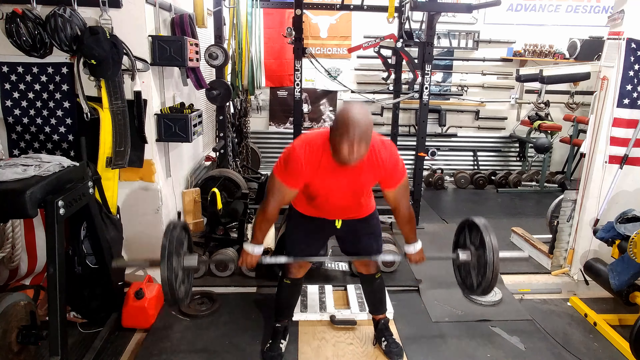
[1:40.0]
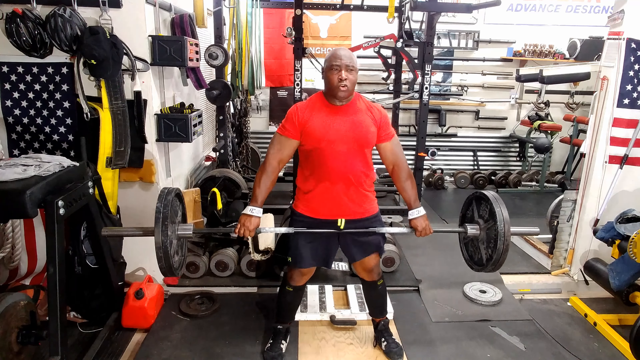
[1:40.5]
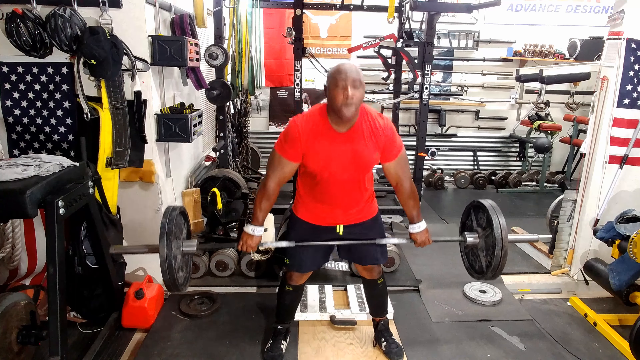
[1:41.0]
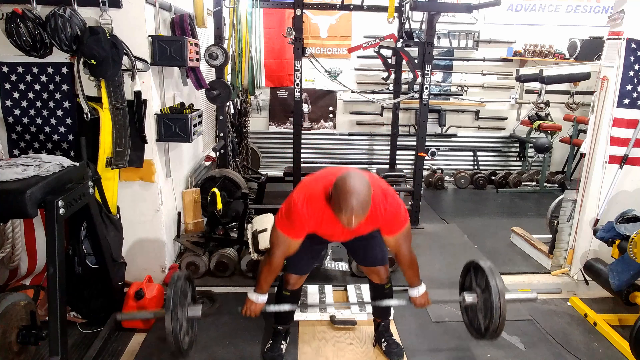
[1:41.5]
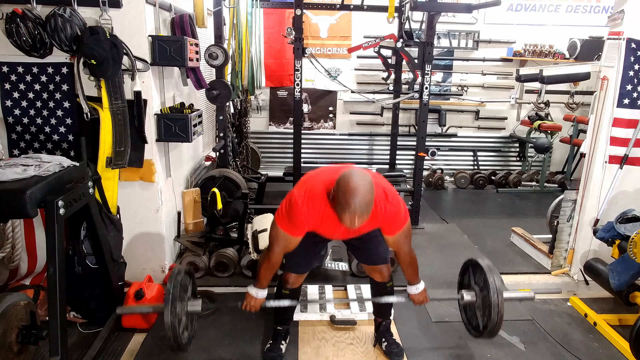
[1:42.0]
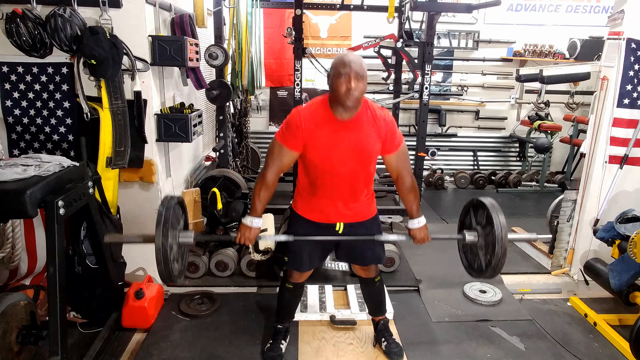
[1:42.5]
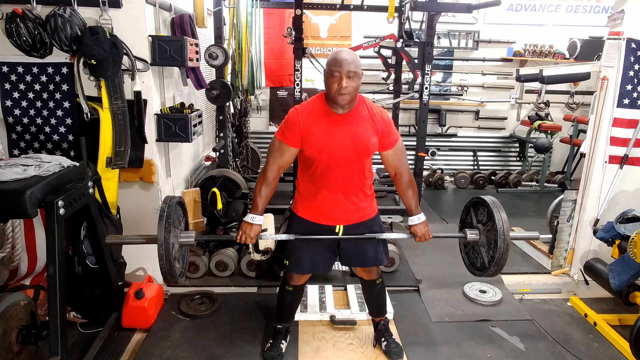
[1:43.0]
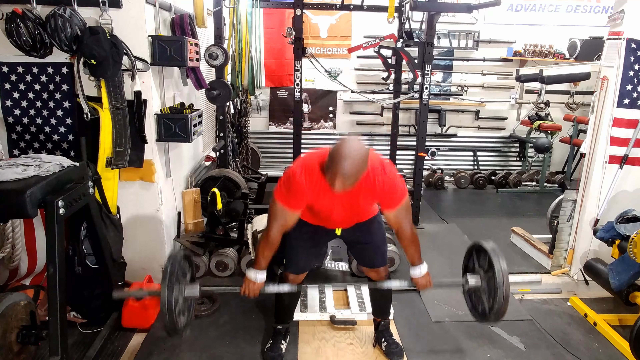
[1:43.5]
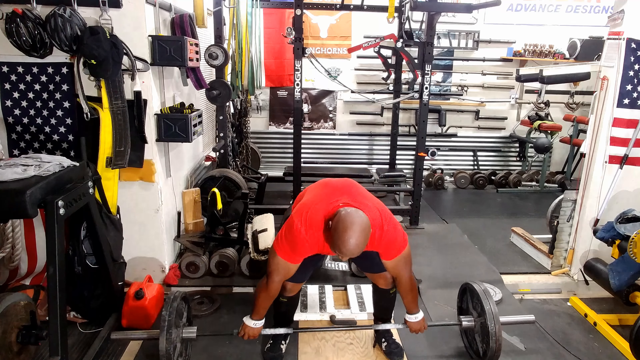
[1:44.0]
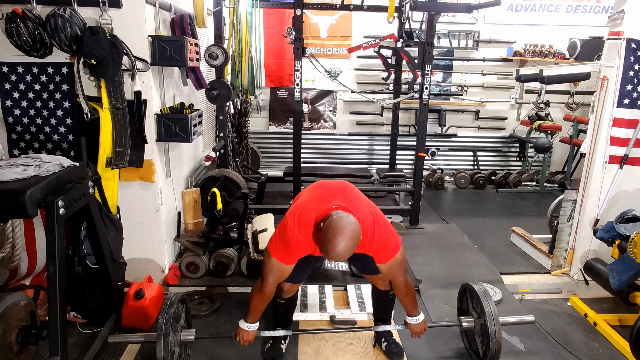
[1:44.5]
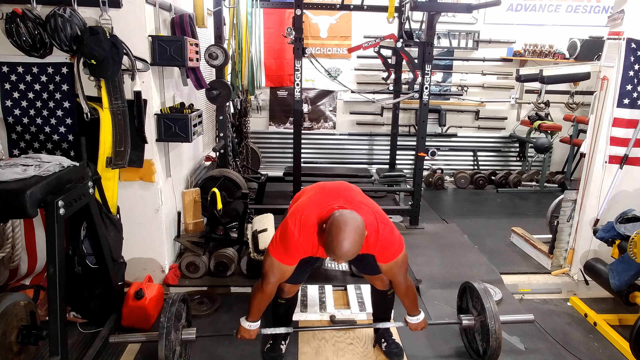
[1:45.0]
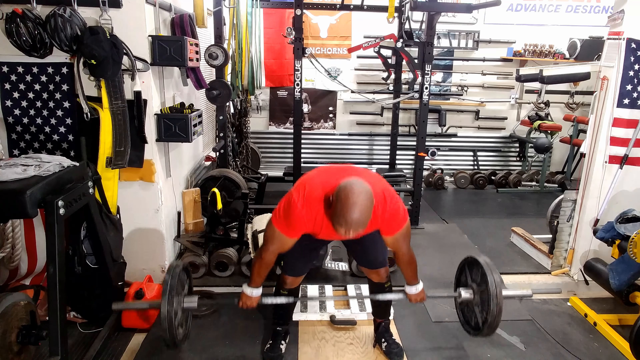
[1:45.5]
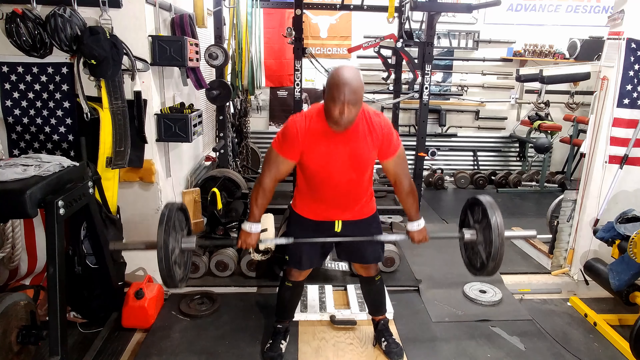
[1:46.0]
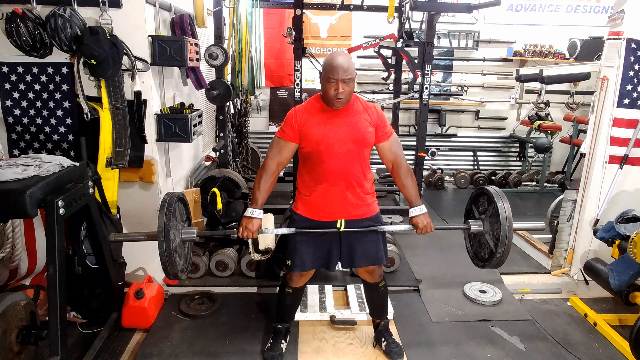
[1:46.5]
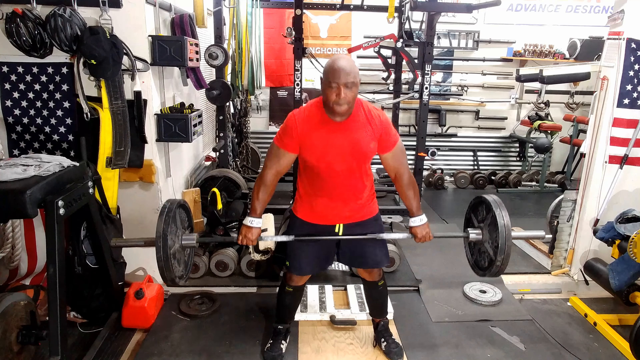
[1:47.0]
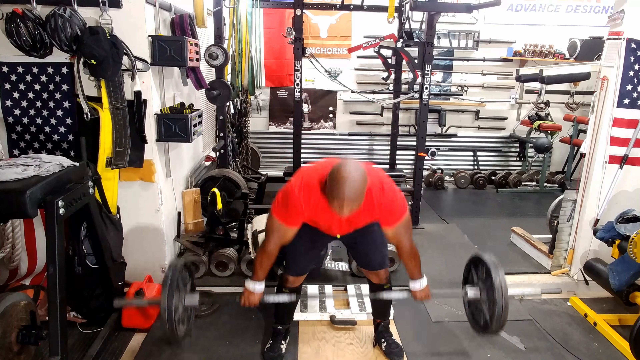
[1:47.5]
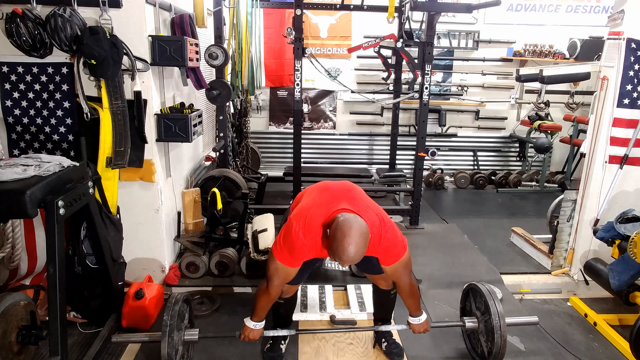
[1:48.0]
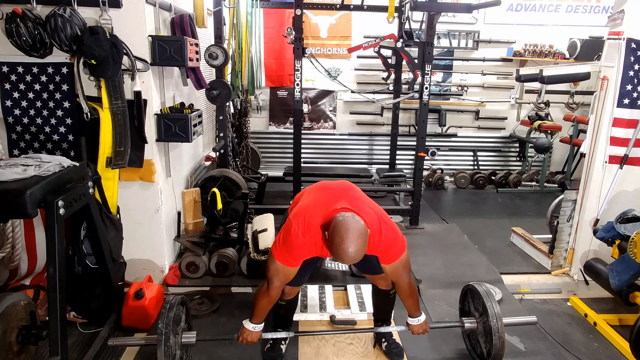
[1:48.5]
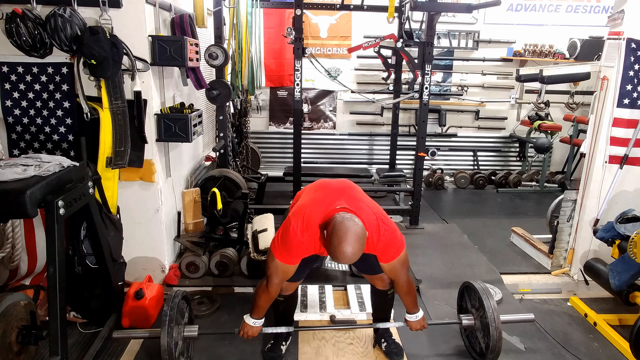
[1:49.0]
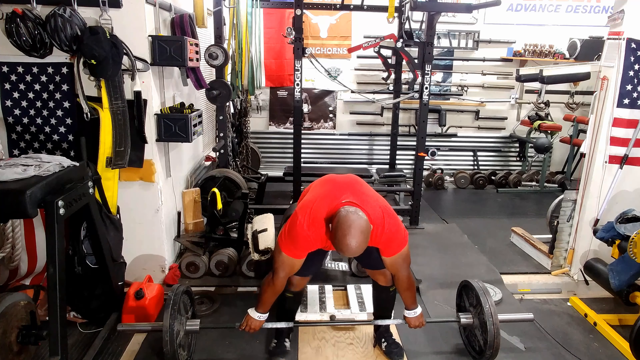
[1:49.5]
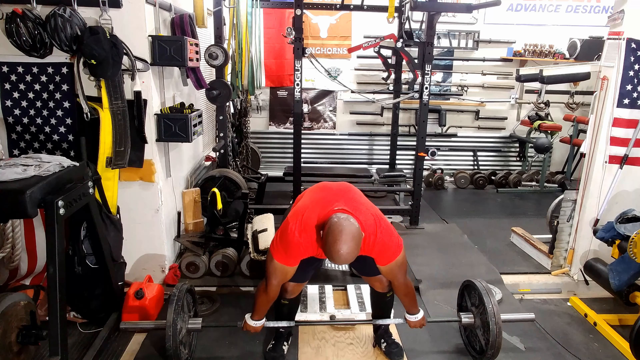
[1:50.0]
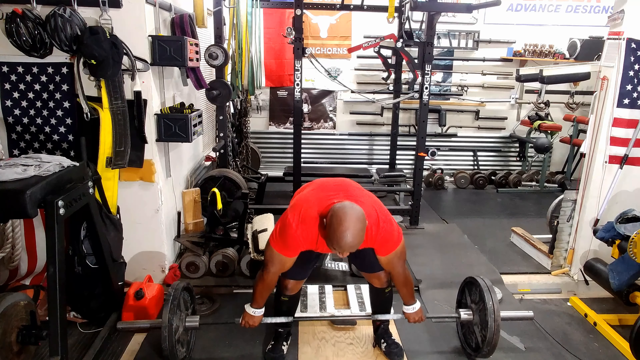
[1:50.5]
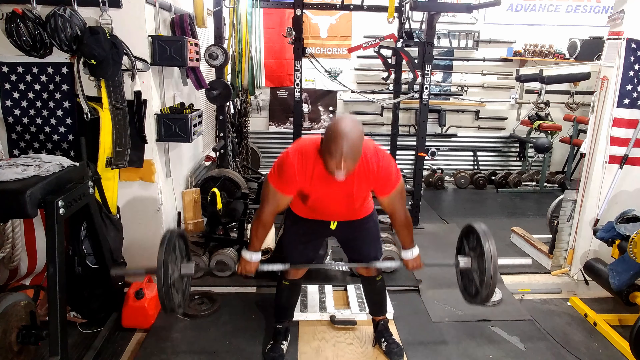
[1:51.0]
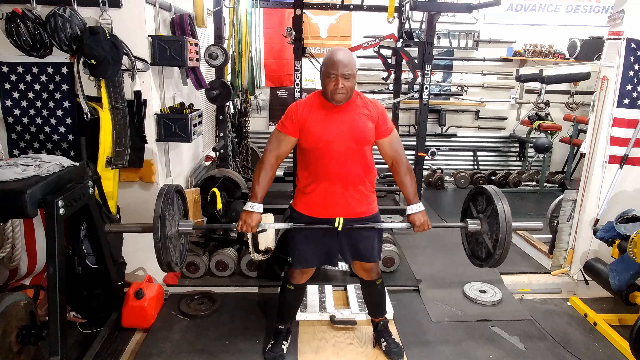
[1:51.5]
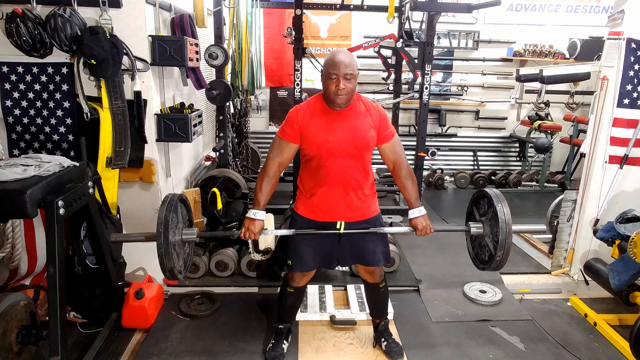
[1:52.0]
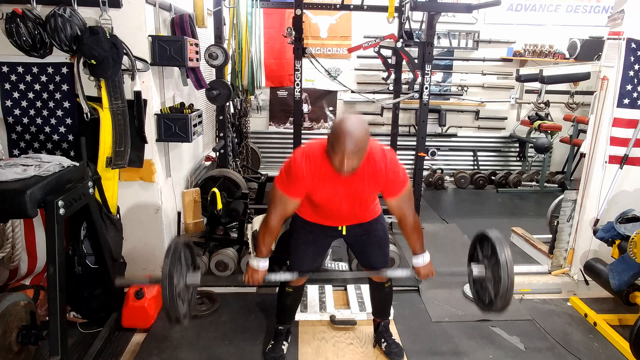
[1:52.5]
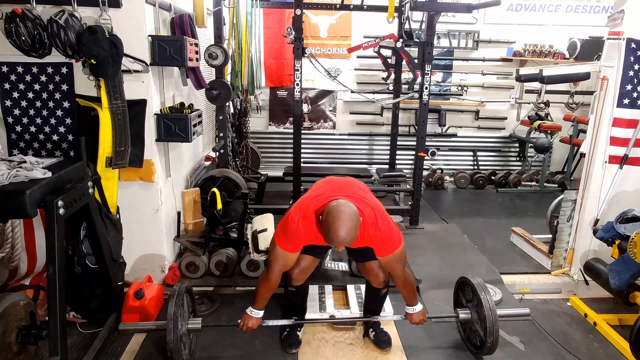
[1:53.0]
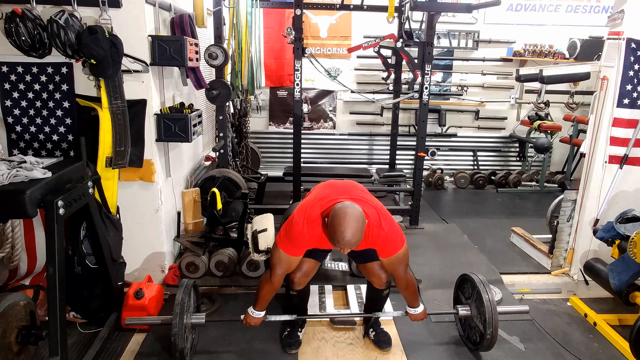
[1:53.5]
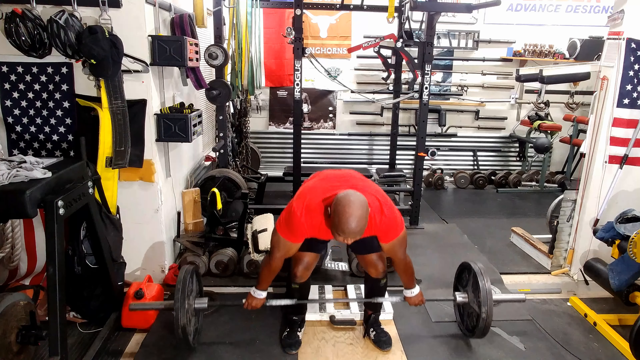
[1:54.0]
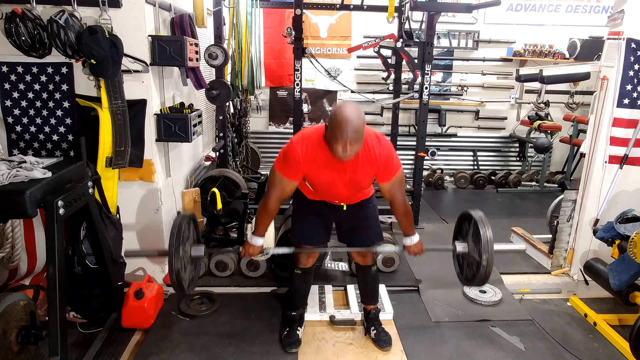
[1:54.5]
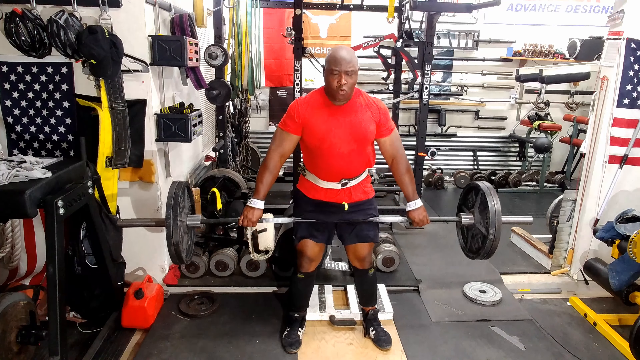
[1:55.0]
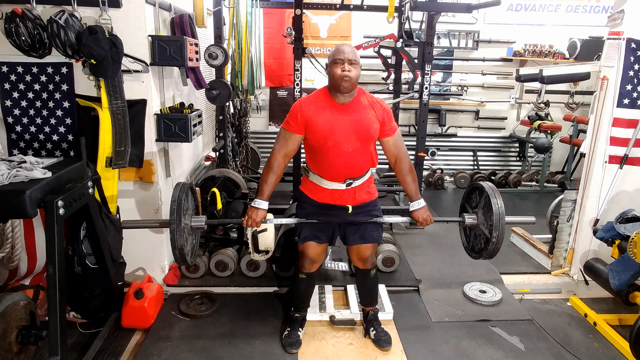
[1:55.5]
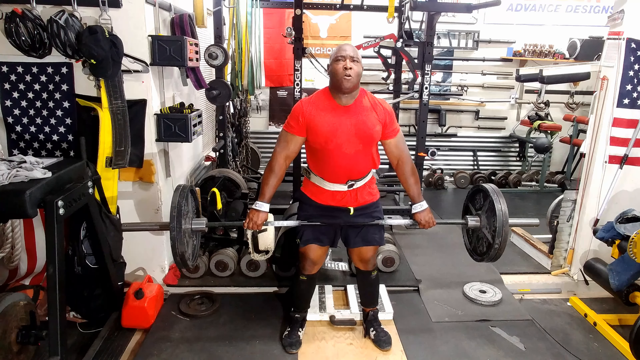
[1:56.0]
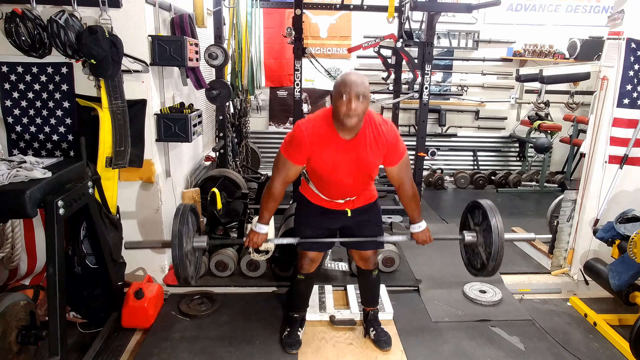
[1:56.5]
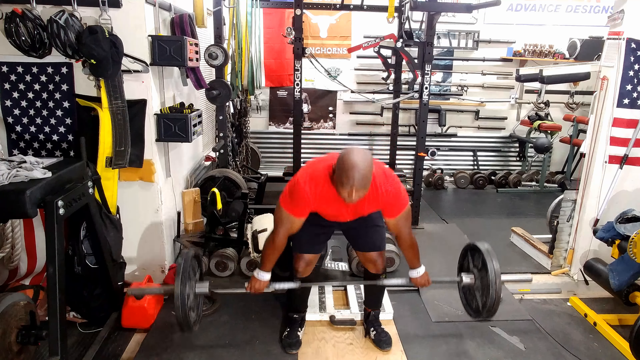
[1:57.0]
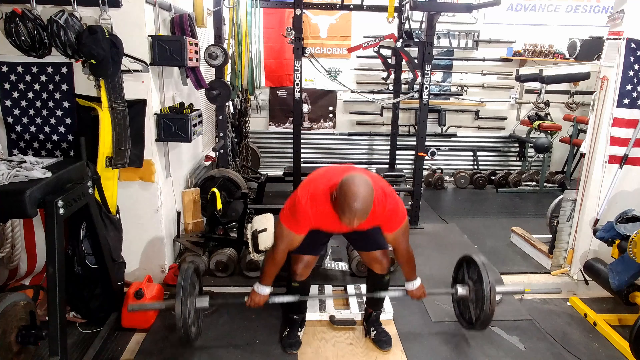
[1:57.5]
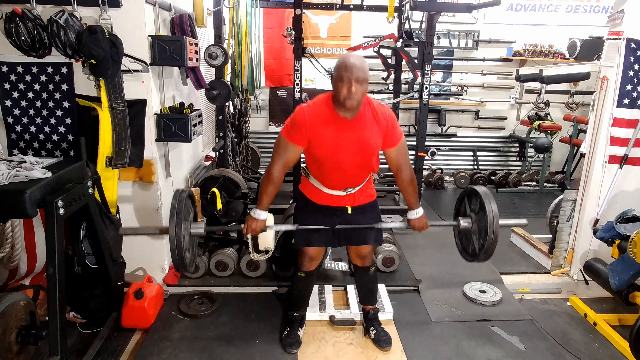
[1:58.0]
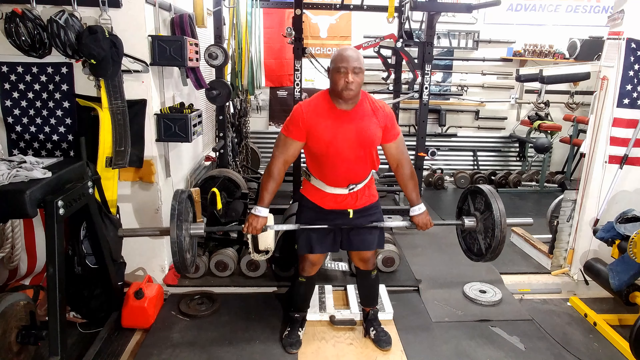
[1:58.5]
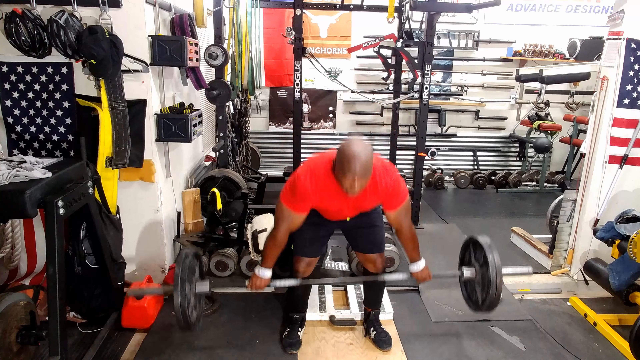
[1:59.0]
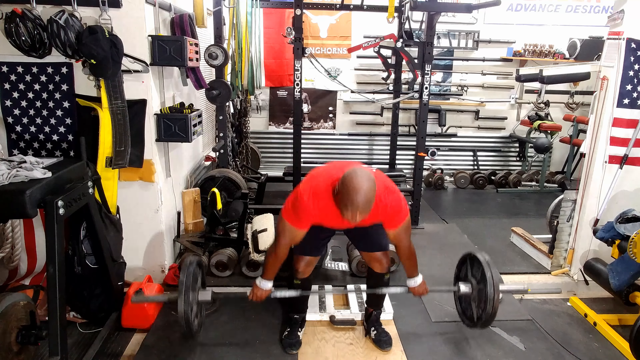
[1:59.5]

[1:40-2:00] The man continues lifting with his arms outstretched and his palm facing inward toward him. Each time, the bar hits the ground and he has to pick it all the way back up, the strain visible on his face as he blows out, his eyebrows knitted together and his biceps working. He looks up and blows out, struggling. After a cut he lifts faster, as if he has gained some momentum. The camera is a little closer than usual, though his full body is still visible. At one point, as the weight hits the ground, he shifts his leg a little, apparently to re-center himself, and then picks the bar back up, repeating this several times.